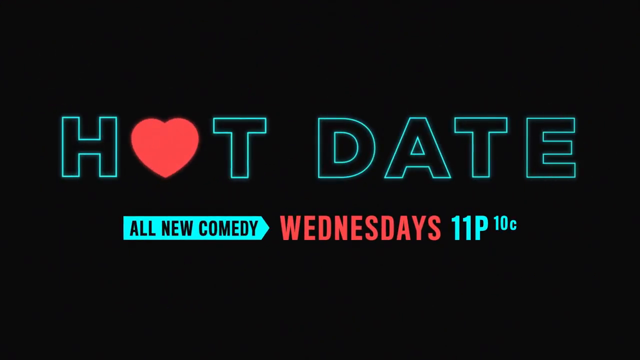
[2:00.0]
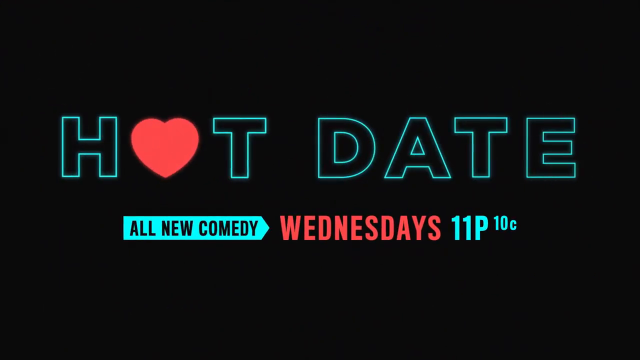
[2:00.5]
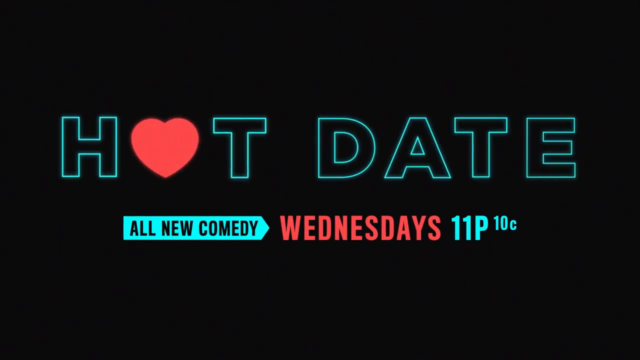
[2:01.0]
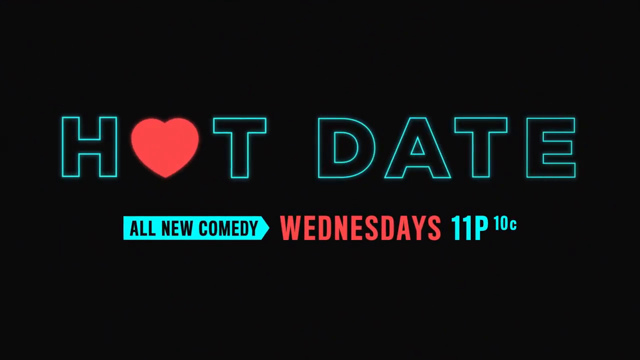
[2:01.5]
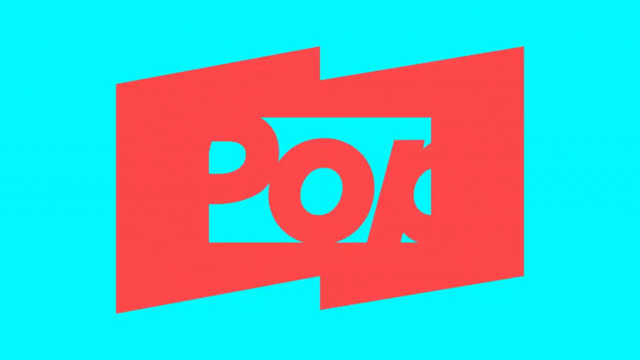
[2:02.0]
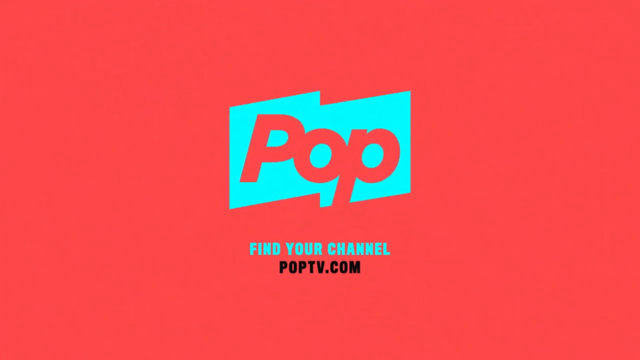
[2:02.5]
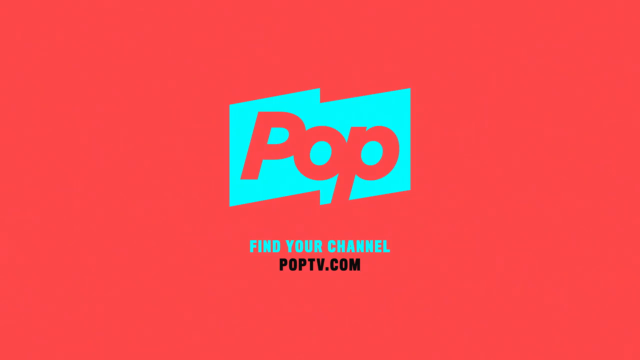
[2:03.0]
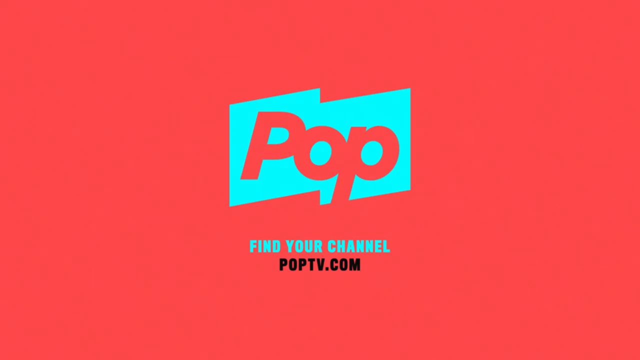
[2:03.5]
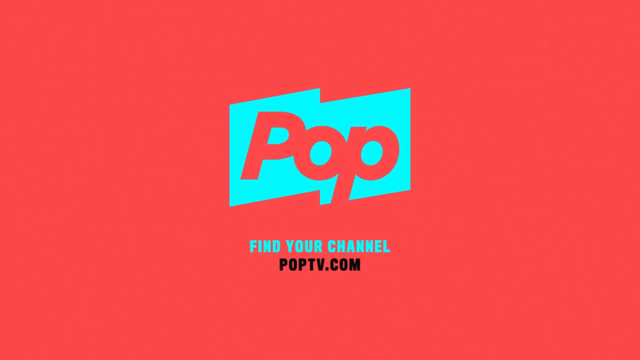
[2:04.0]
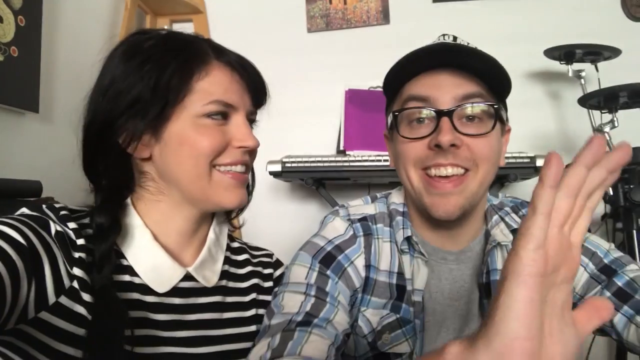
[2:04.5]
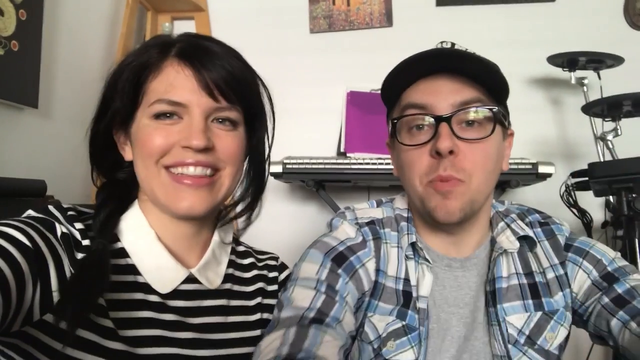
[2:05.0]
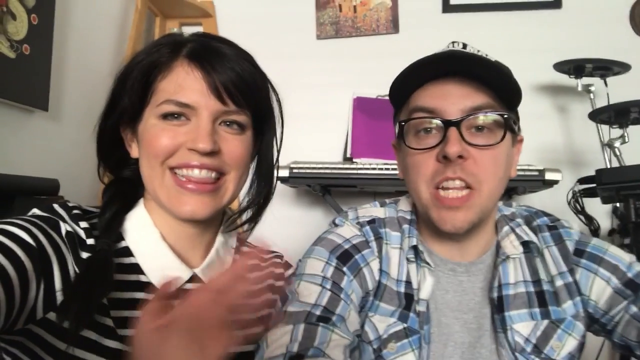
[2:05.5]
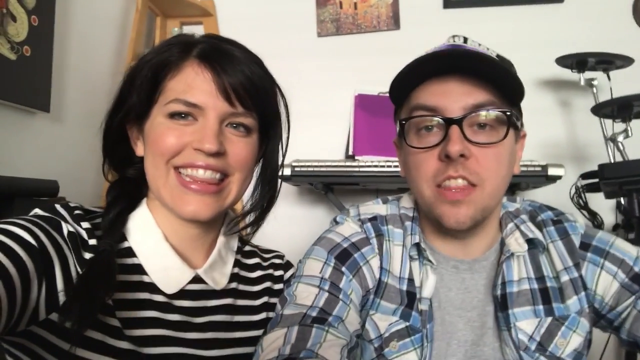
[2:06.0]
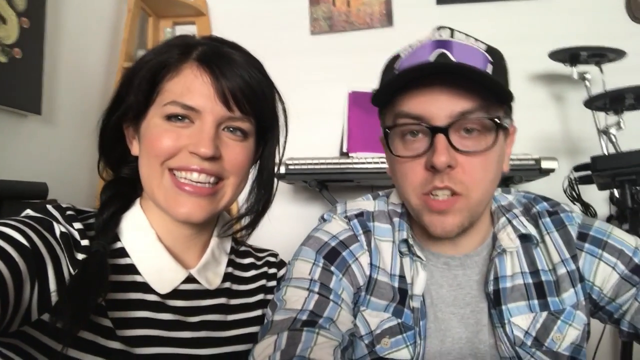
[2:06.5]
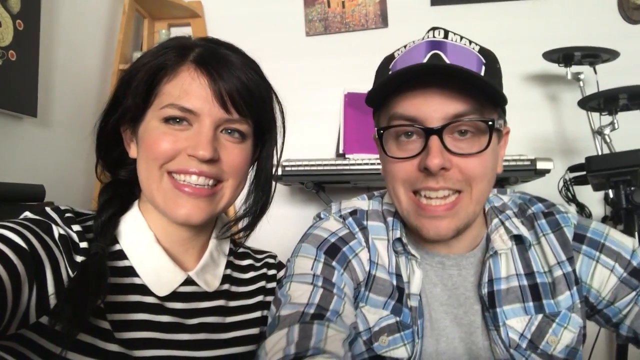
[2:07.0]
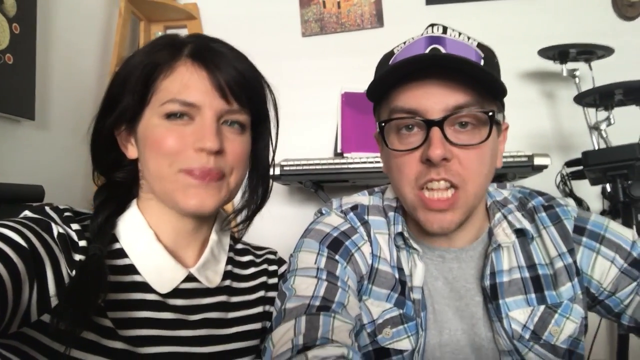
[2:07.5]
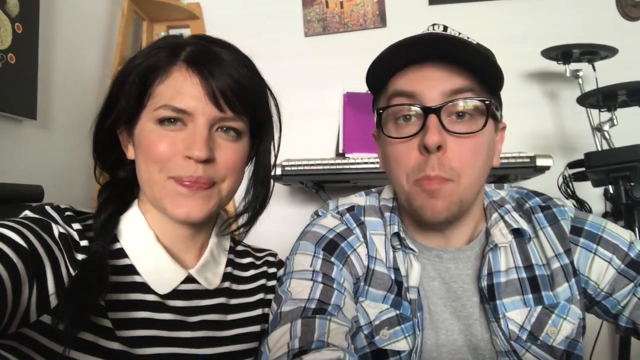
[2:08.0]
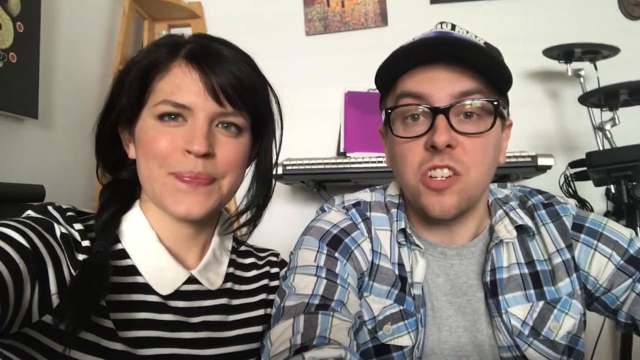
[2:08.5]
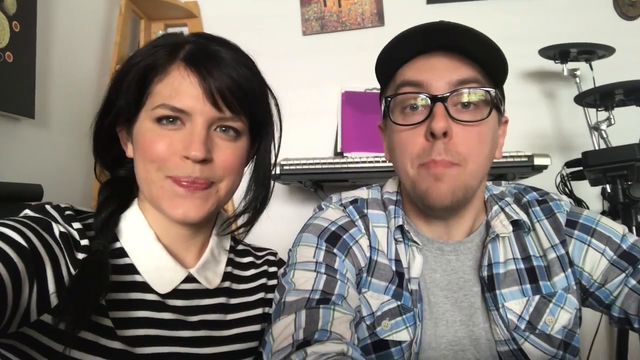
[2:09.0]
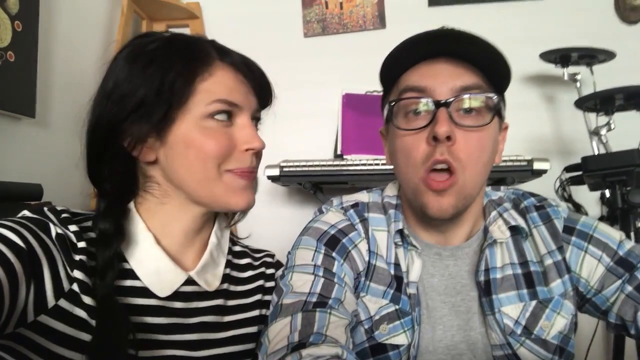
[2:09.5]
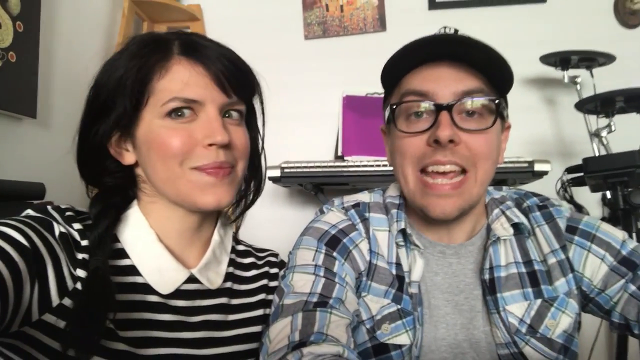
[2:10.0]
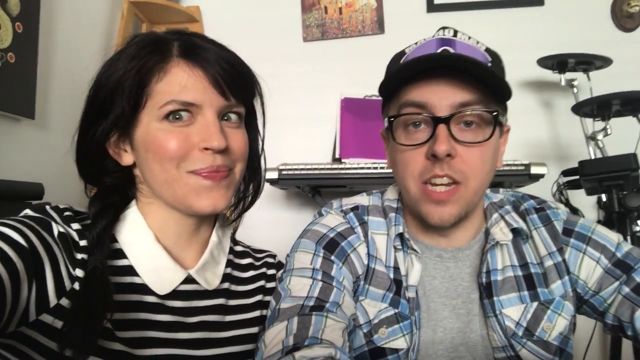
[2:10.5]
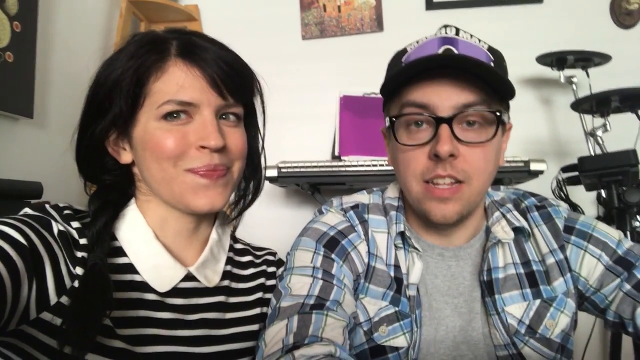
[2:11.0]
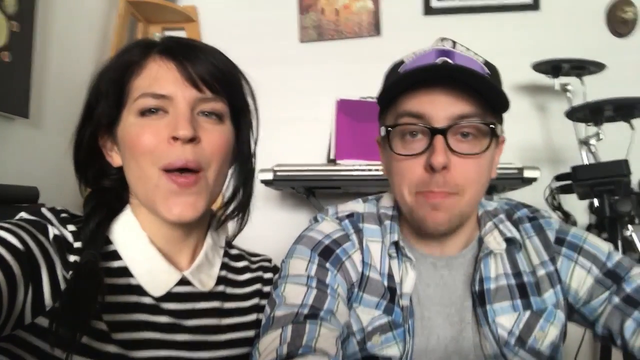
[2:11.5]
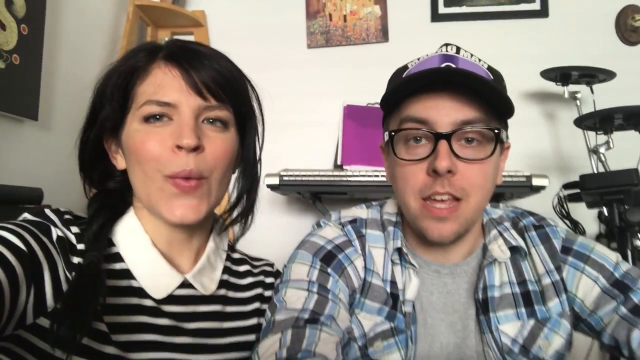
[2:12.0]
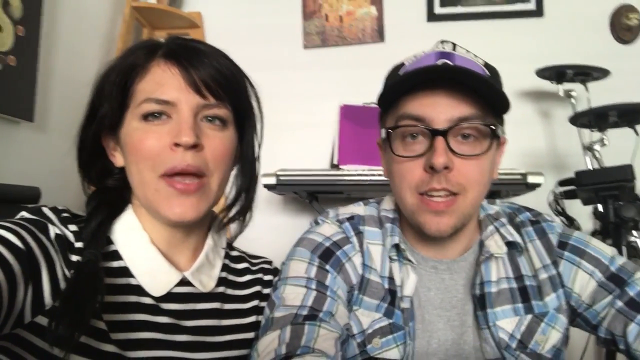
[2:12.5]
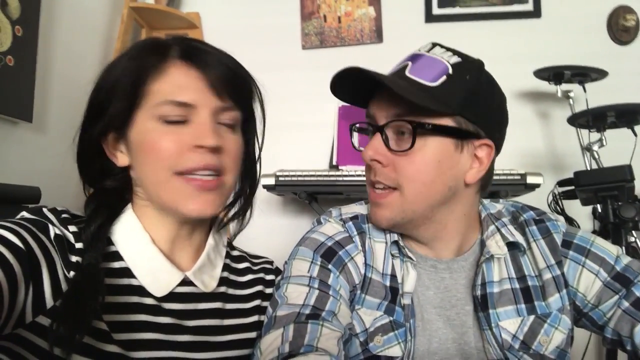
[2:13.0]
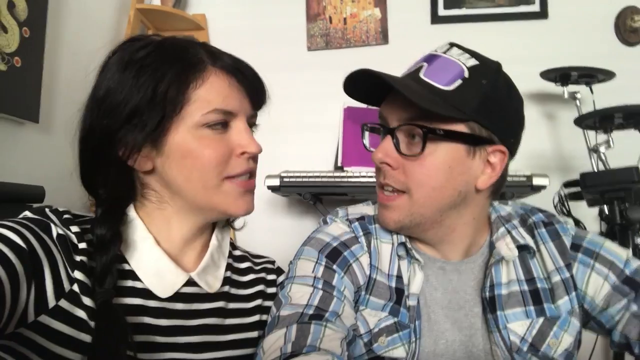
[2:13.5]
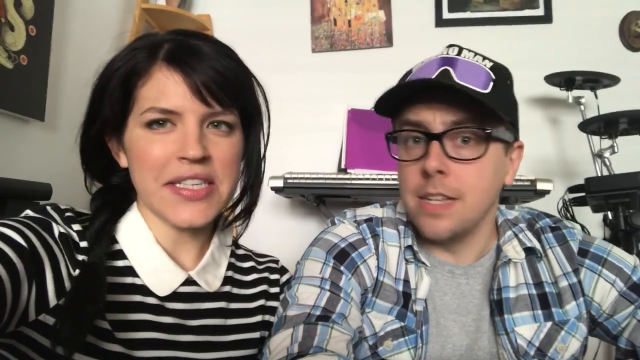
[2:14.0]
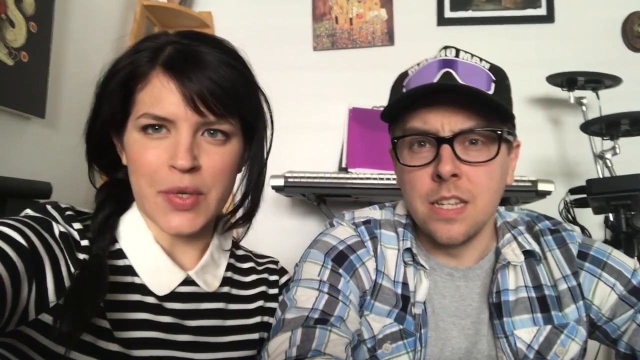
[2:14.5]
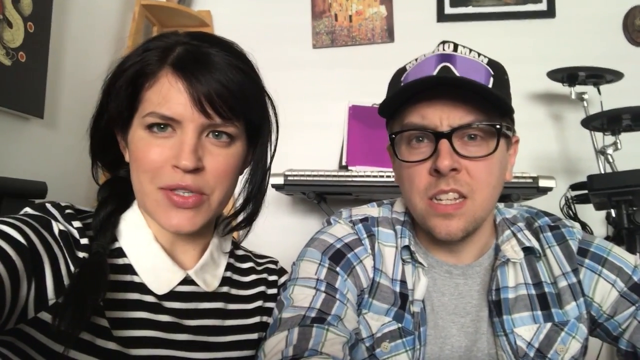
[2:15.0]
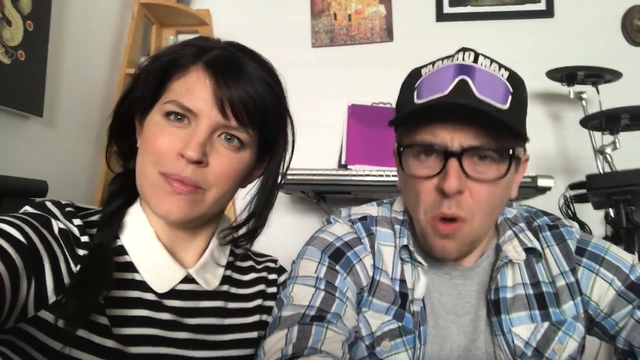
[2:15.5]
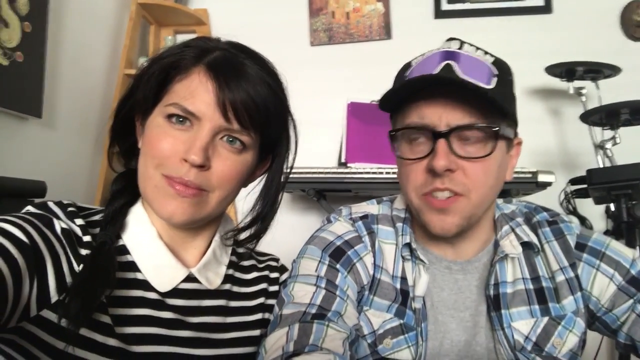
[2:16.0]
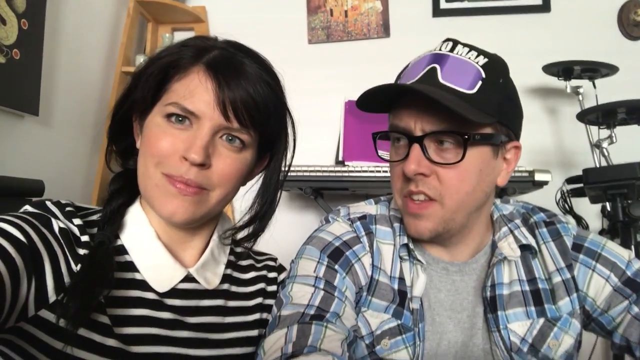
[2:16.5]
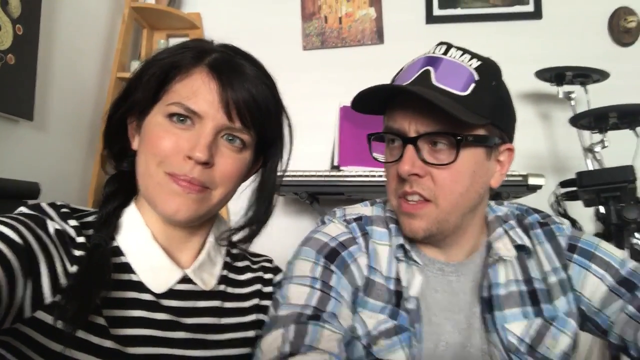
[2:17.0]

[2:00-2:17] A graphic on a black background reads "Hot Date", with the letter O in "hot" replaced by a heart, along with "all new comedy, Wednesdays, 11P, 10C". A logo for Pop, apparently the Pop TV channel, follows. Then a man and a woman appear. The man wears a baseball cap that says "Macho Man", black-rimmed glasses, and an open grey, white and blue flannel shirt over a grey t-shirt. The woman next to him has black hair with bangs and long pigtails and wears a black and white striped shirt with a big white collar. They are in a room with white walls and some paintings and posters on them; in the background are a synthesizer, what looks like a drum set, and maybe some other musical equipment. They talk to each other and to the camera.